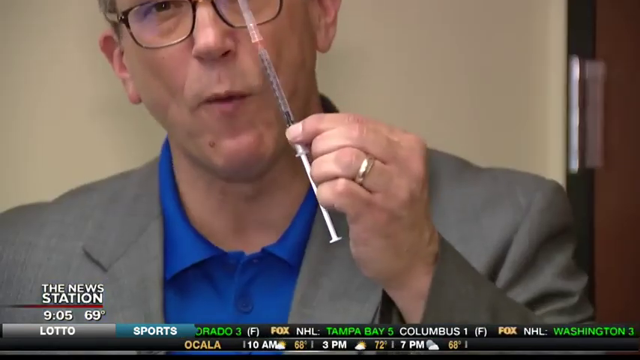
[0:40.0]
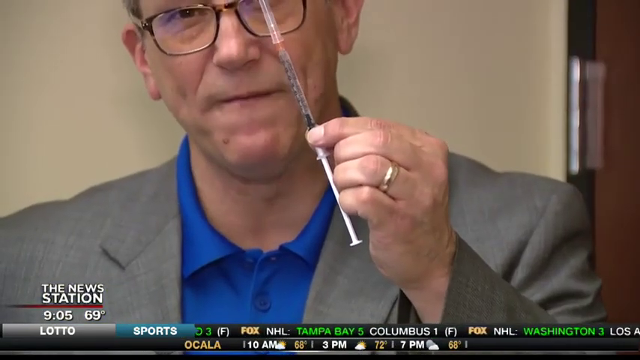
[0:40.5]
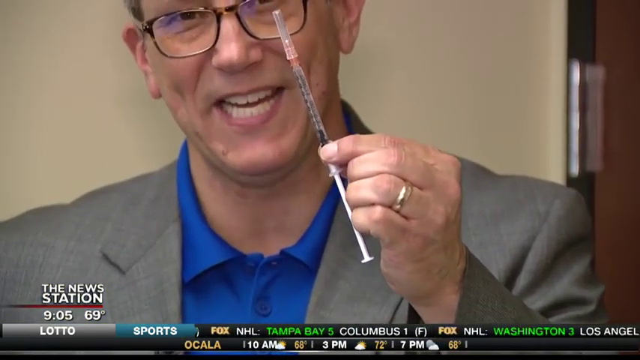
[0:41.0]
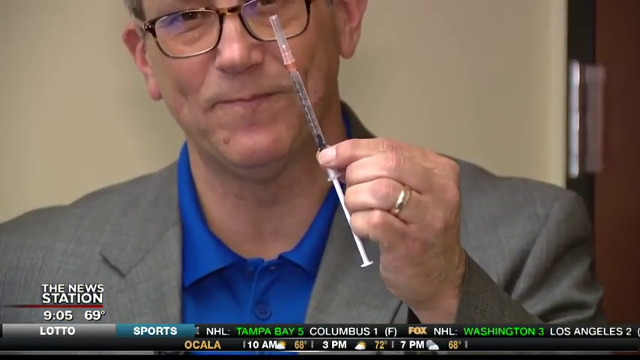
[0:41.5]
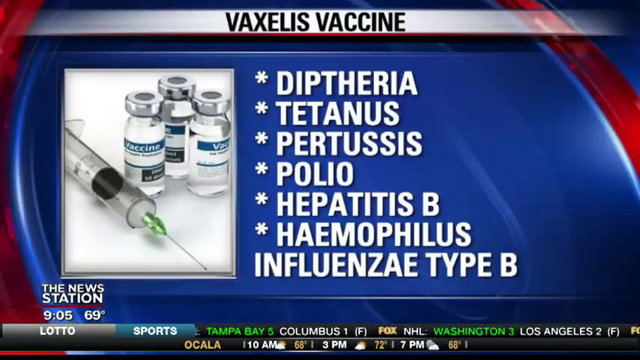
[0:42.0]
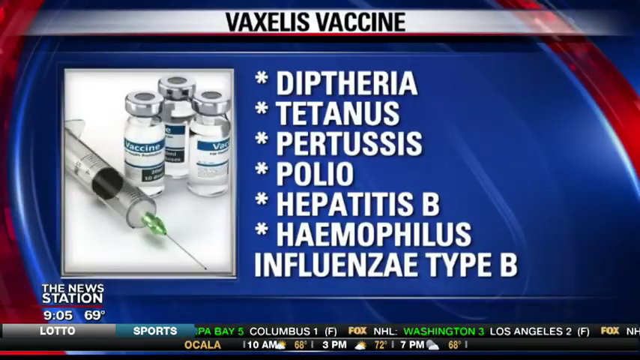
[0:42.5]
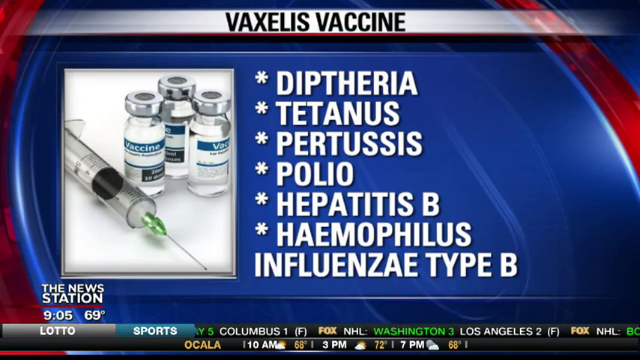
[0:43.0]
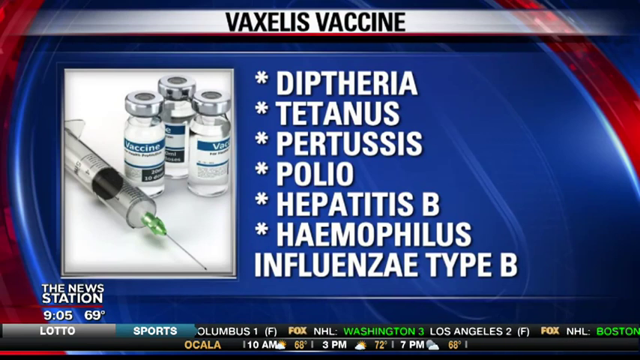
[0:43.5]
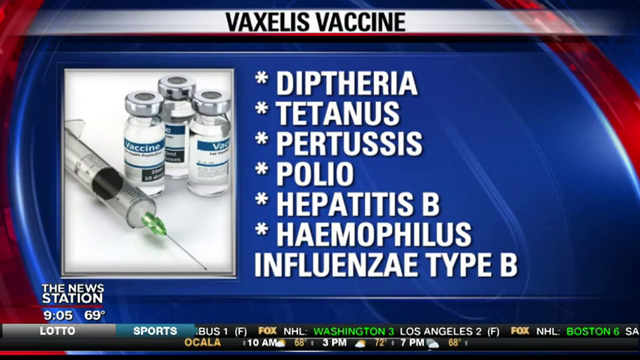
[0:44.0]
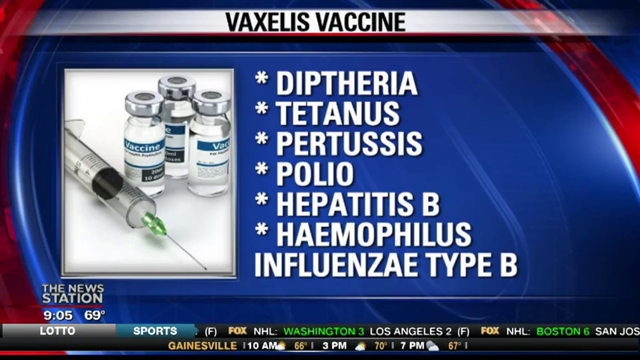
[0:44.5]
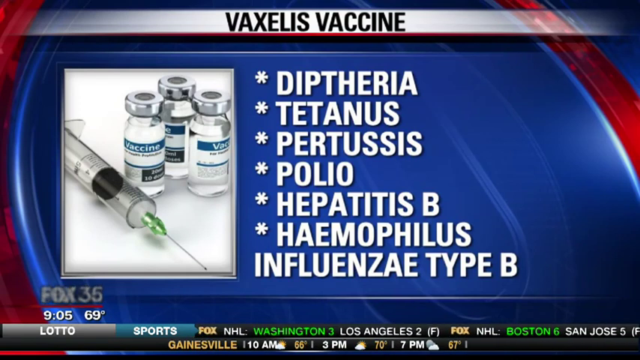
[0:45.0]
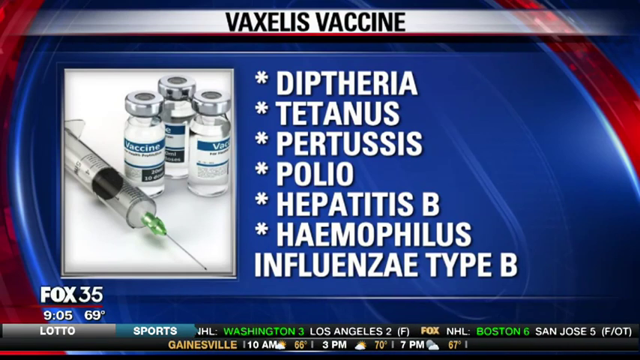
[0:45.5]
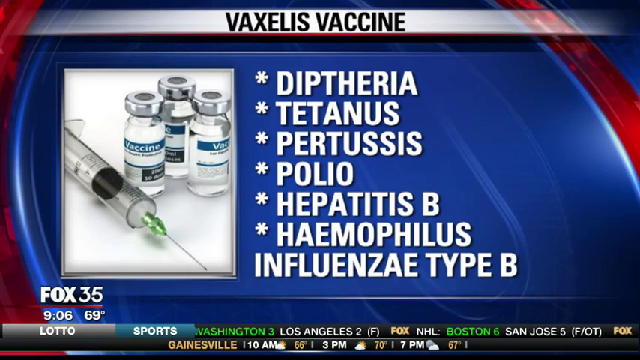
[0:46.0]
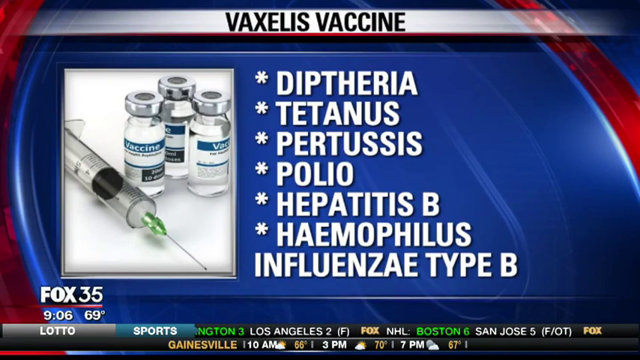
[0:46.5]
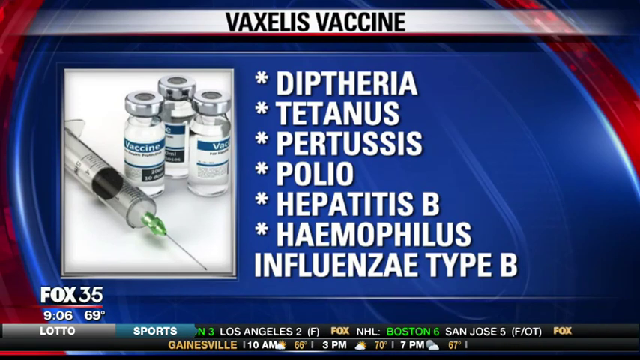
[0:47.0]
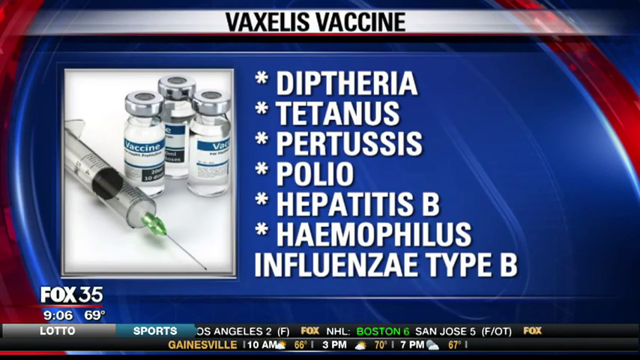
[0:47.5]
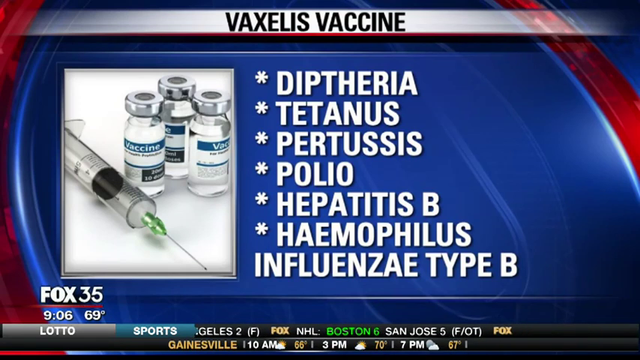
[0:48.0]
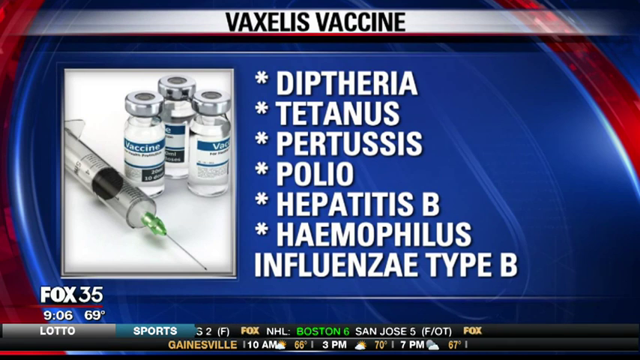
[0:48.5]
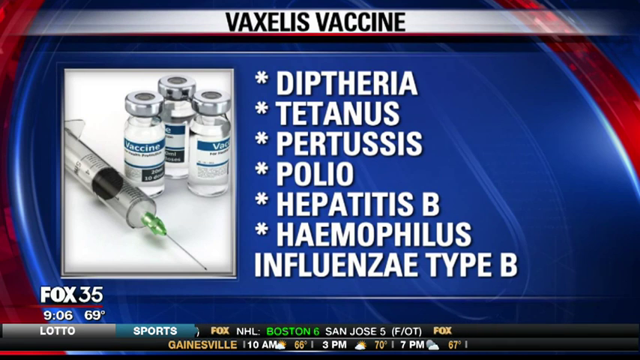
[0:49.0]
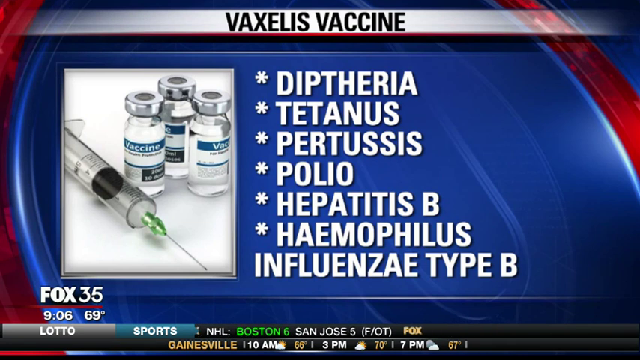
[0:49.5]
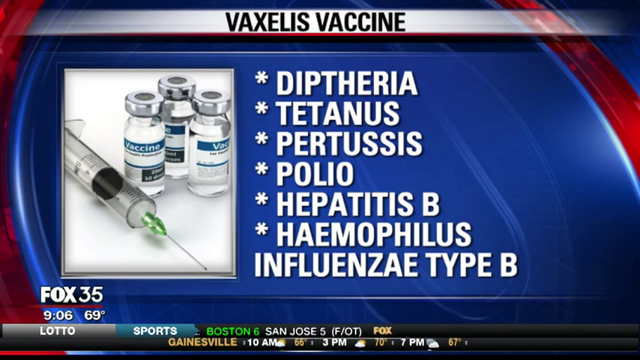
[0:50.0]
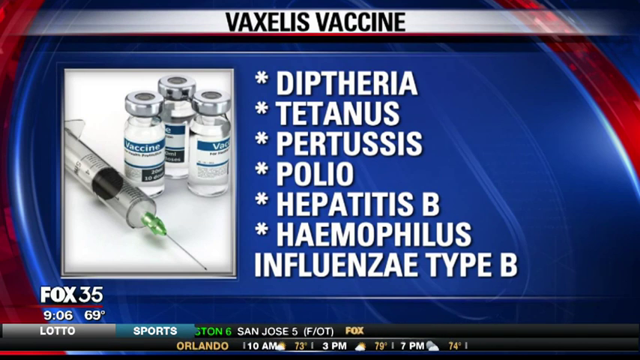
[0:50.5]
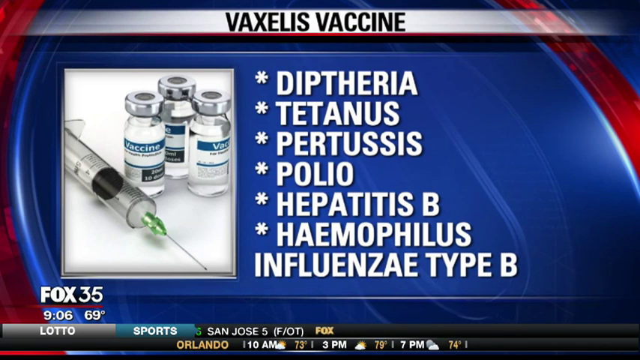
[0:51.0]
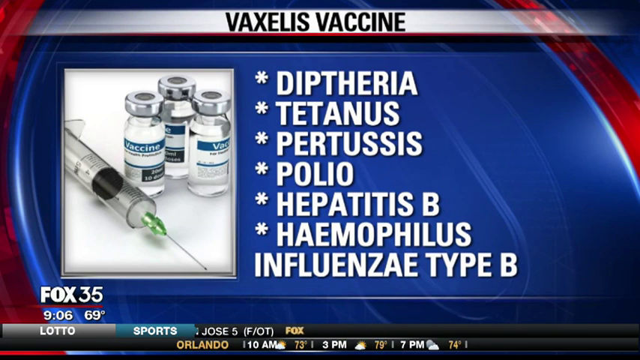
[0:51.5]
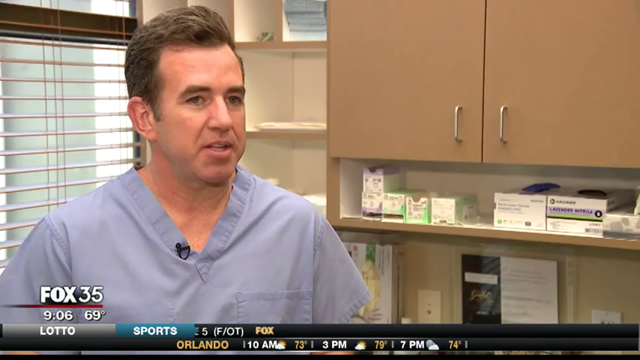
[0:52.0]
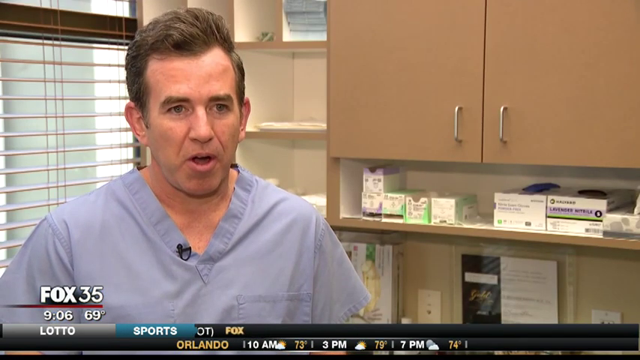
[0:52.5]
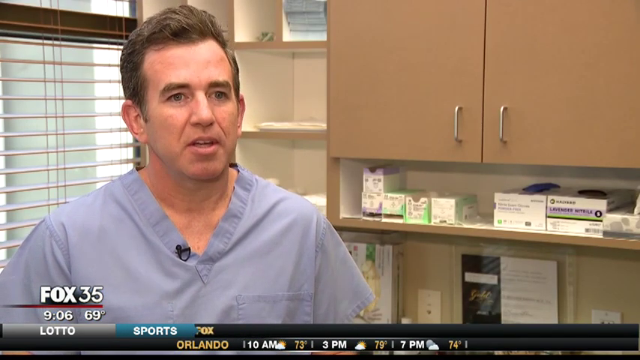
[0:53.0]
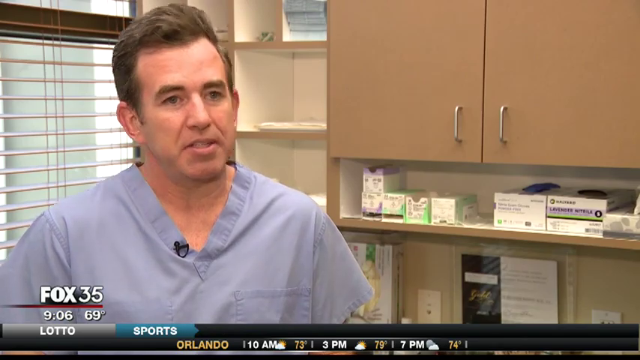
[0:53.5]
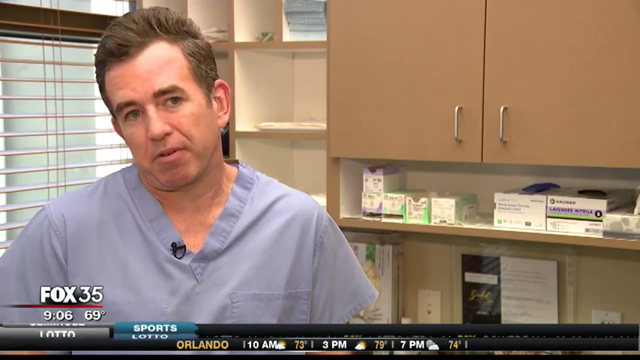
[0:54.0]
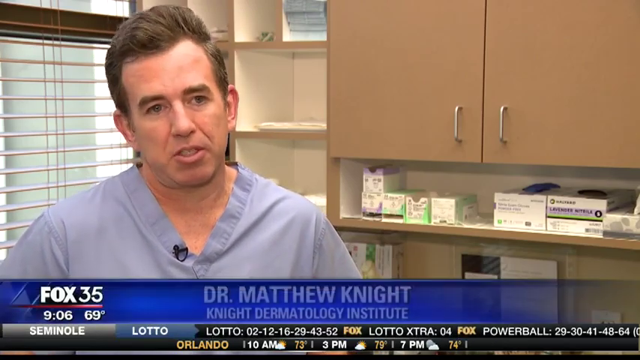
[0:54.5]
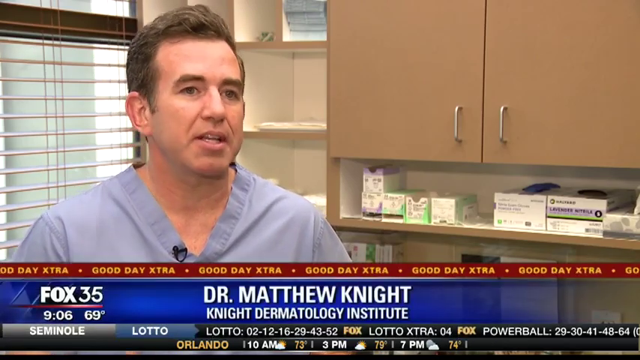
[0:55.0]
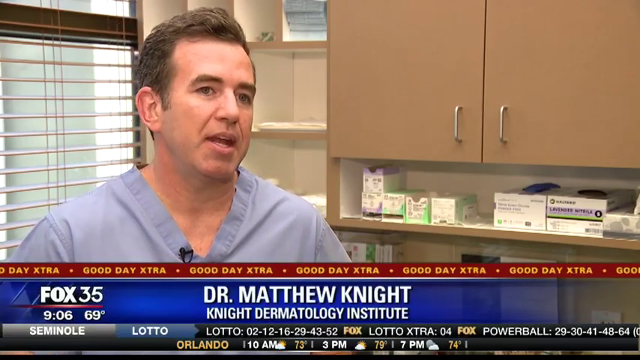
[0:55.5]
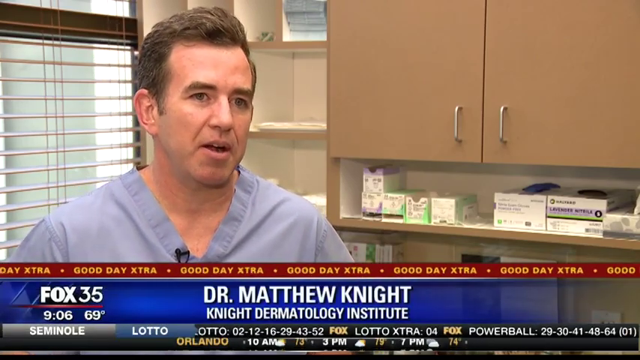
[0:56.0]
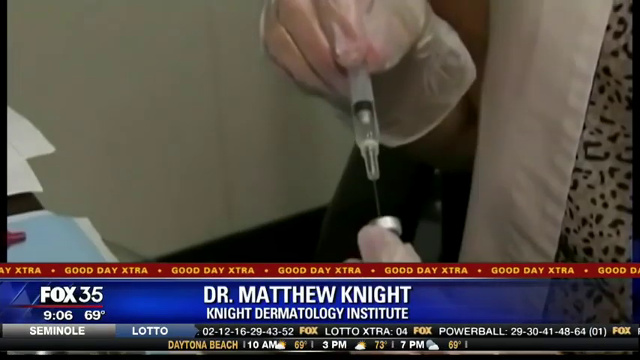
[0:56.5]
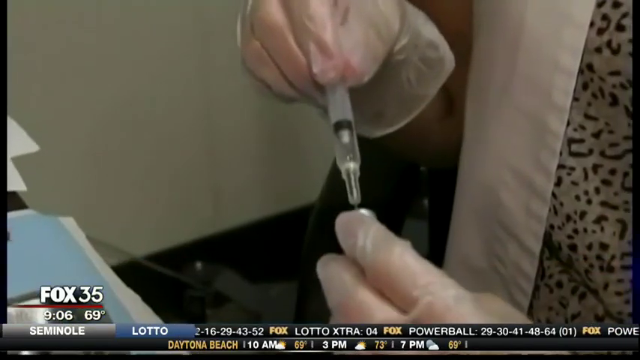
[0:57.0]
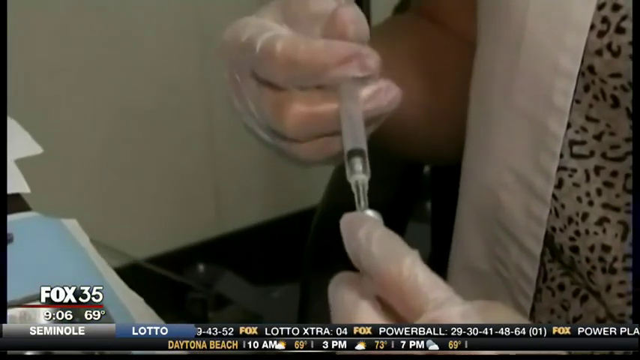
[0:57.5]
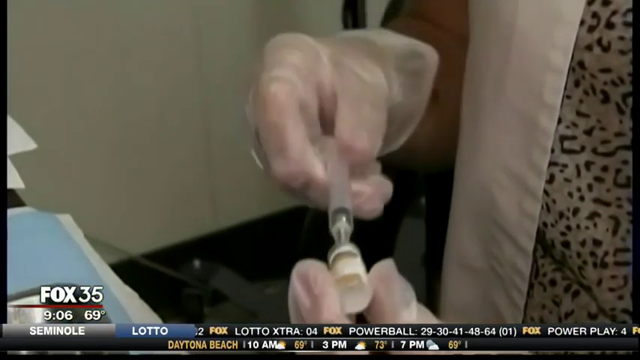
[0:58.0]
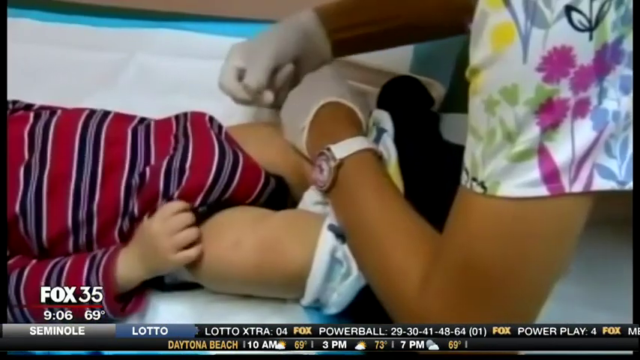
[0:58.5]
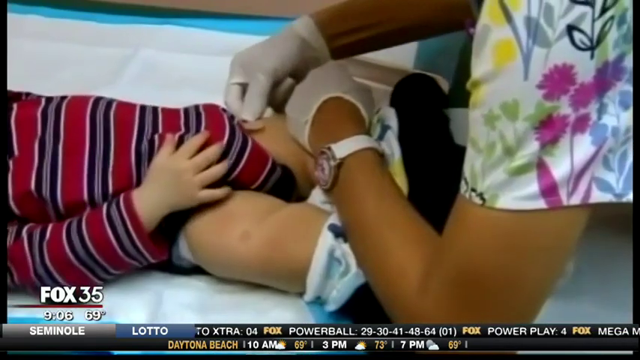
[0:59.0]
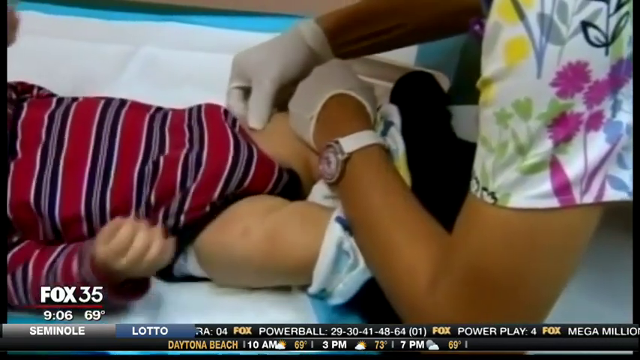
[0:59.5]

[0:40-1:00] The man holds up a filled hypodermic syringe in front of his face, showing it to the camera; he wears a wedding band on his ring finger. The shot switches to a graphic with a top banner that says "Vaxellus vaccine". Beneath it is an image of three vaccine vials and a very large hypodermic needle with a syringe. To the right of the image, bullet points marked with white asterisks read "diphtheria, tetanus, pertussis, polio, hepatitis B, hemophilias, influenza type B" in white block letters on a blue circular background. The video switches back to the doctor speaking, with a ticker reading "Dr. Matthew Knight". Then a nurse in a white, multicolored floral scrub shirt, wearing exam gloves and a smartwatch with a white band on her left wrist, gives a baby in a red and black striped onesie a shot in the thigh.